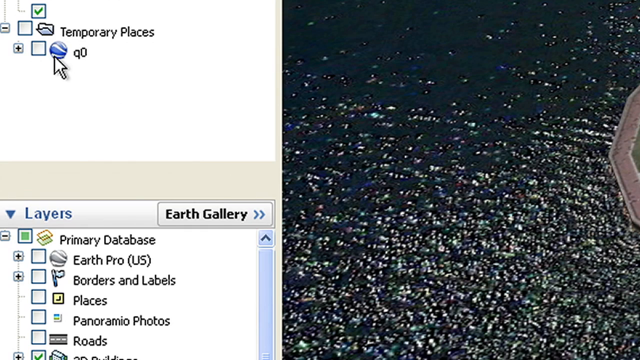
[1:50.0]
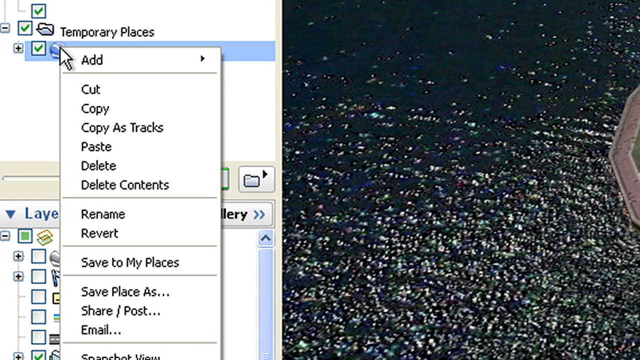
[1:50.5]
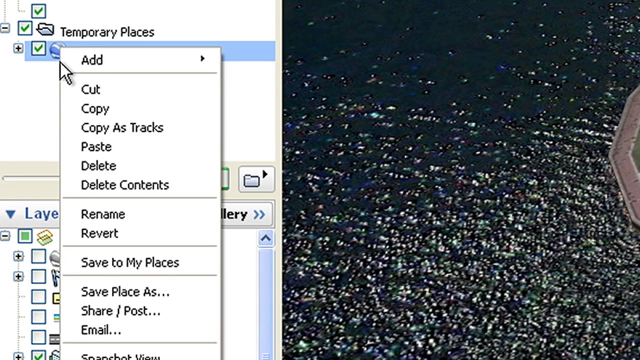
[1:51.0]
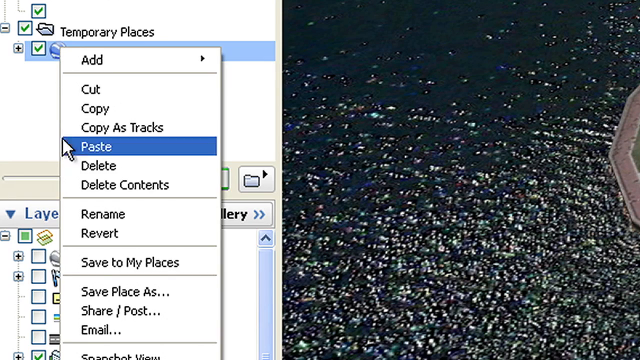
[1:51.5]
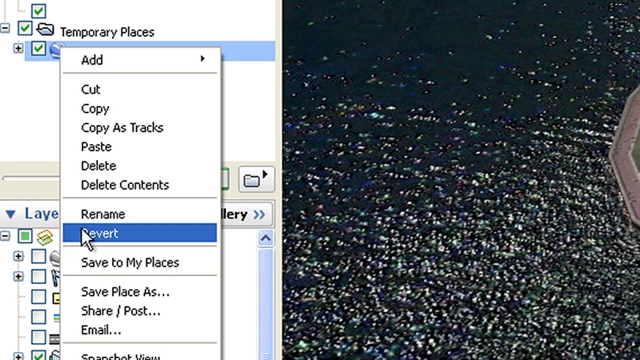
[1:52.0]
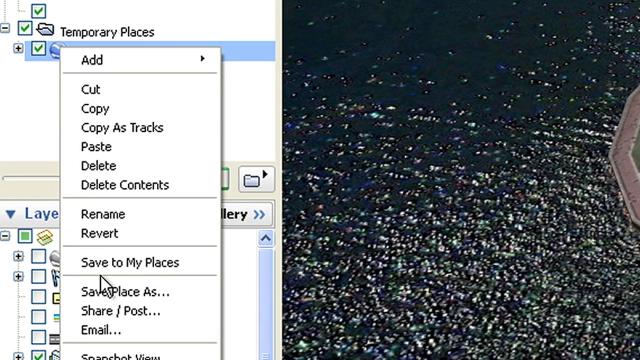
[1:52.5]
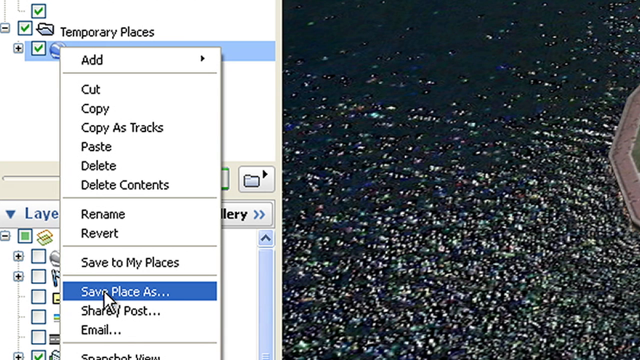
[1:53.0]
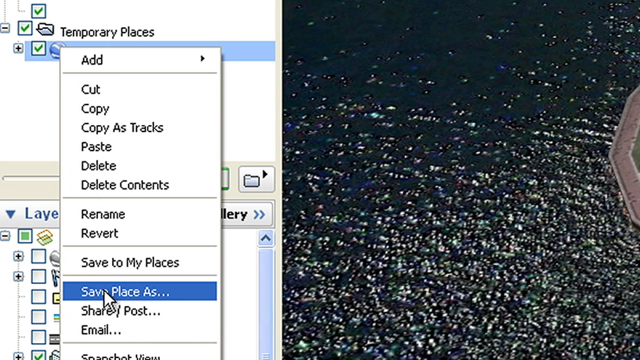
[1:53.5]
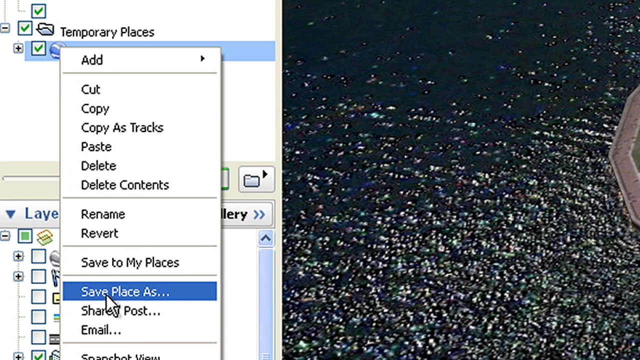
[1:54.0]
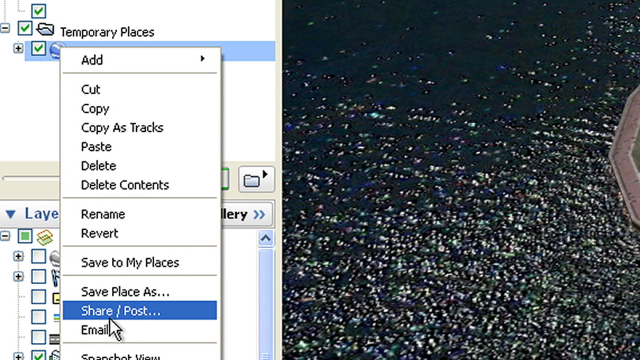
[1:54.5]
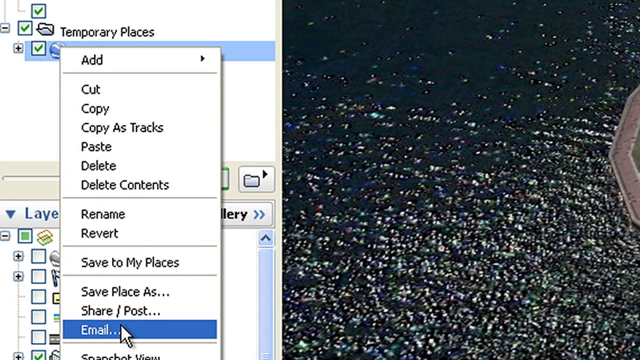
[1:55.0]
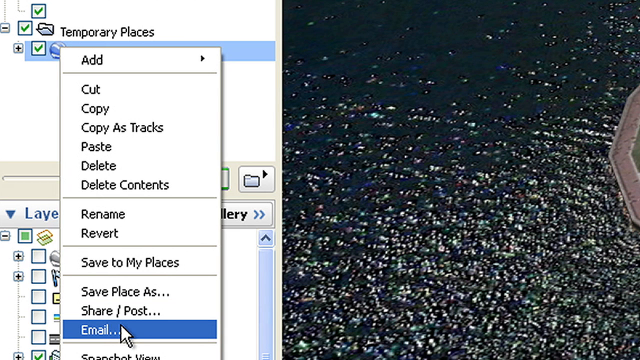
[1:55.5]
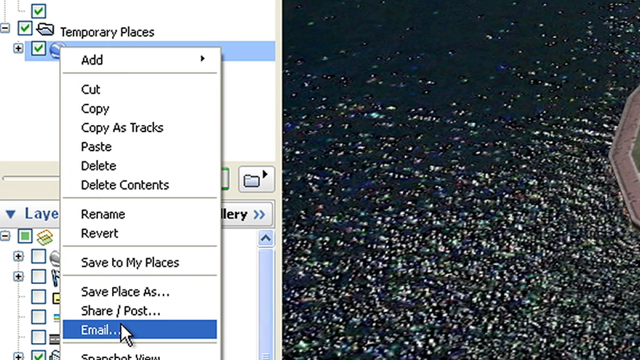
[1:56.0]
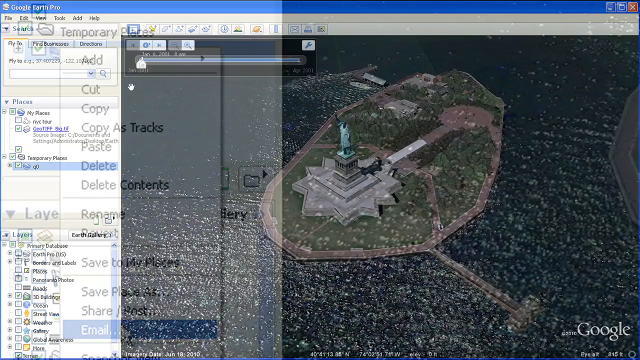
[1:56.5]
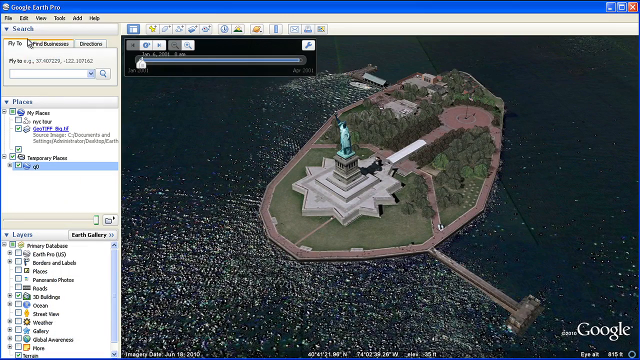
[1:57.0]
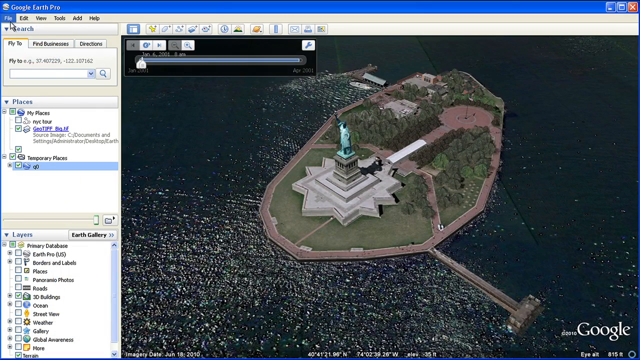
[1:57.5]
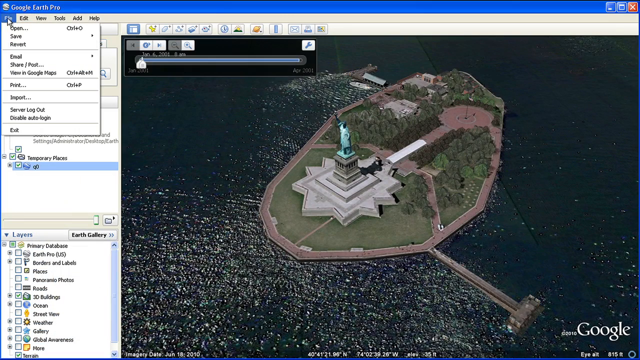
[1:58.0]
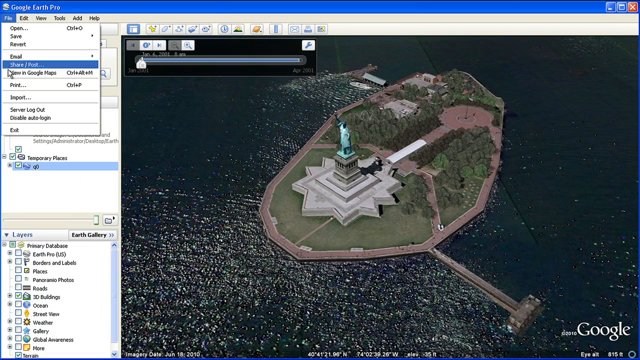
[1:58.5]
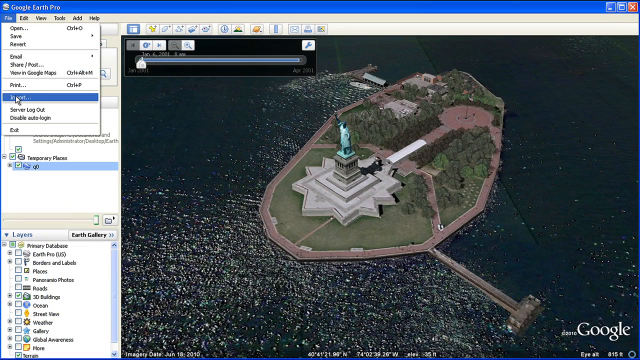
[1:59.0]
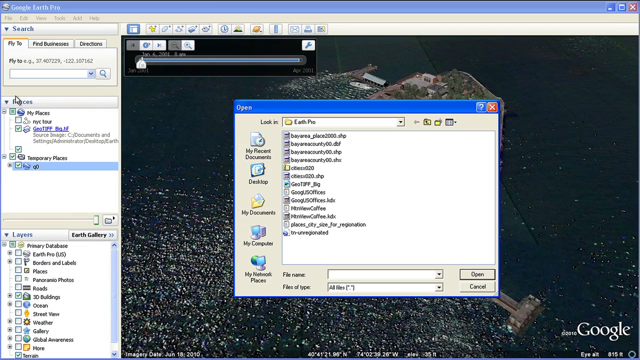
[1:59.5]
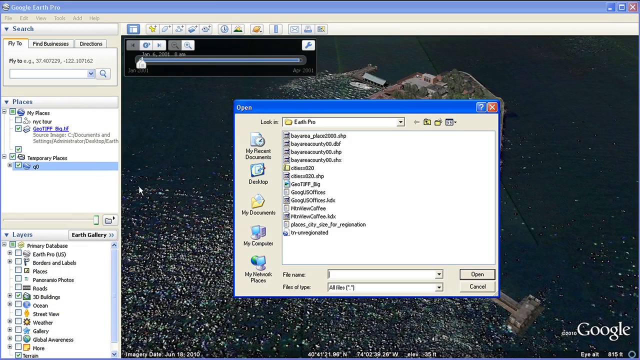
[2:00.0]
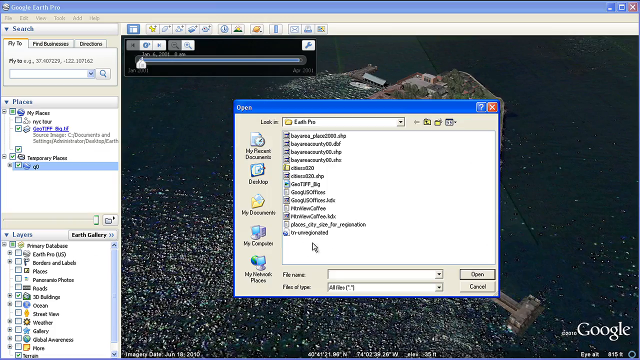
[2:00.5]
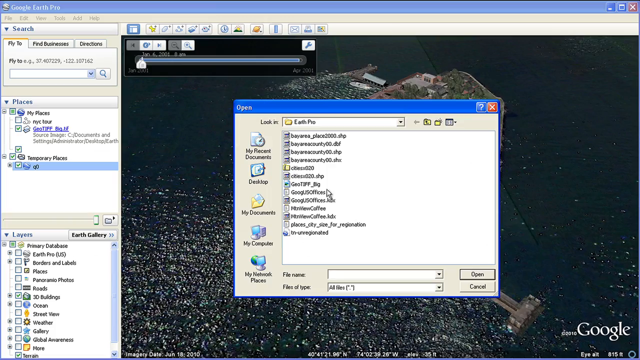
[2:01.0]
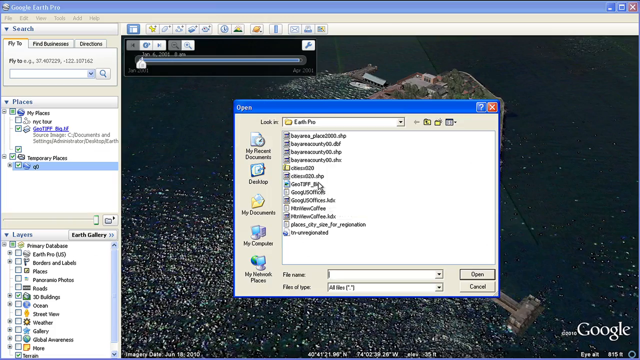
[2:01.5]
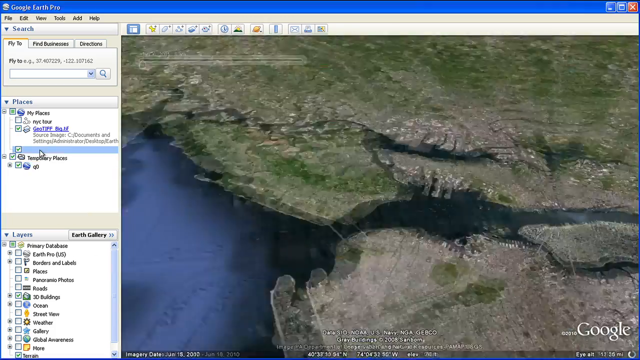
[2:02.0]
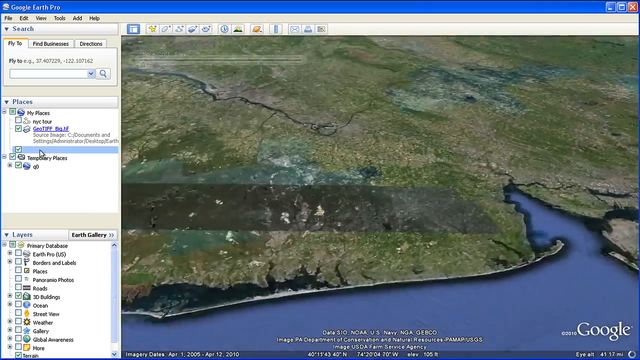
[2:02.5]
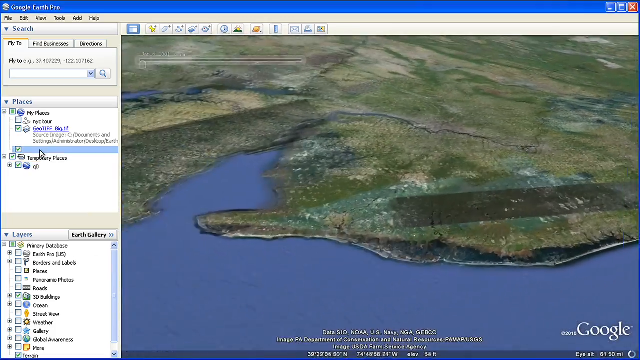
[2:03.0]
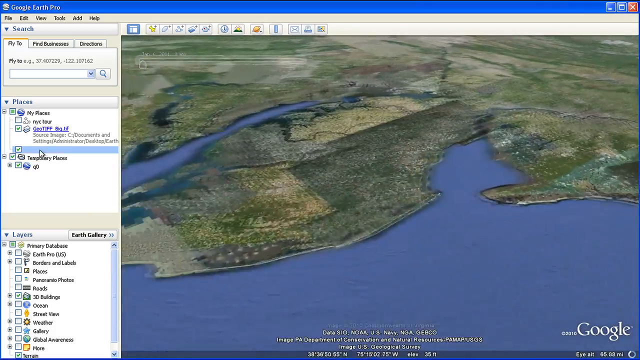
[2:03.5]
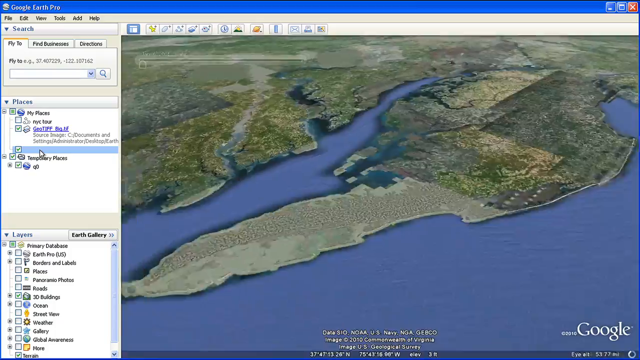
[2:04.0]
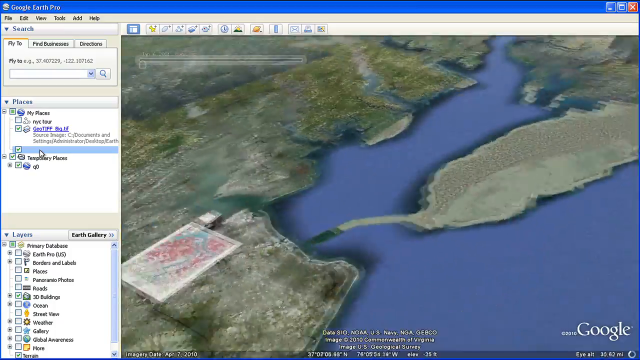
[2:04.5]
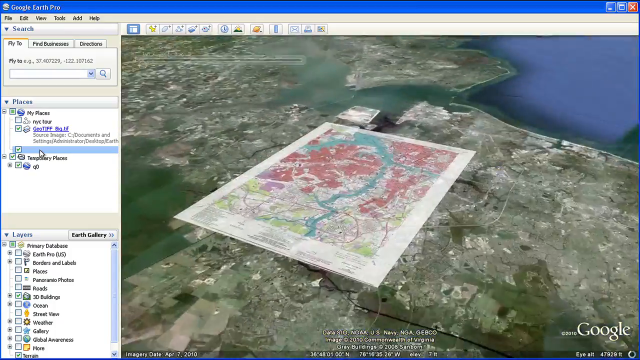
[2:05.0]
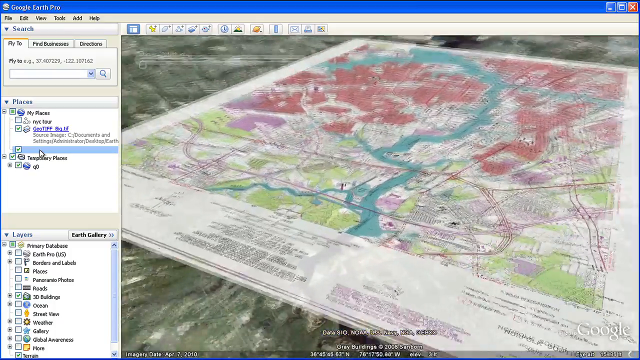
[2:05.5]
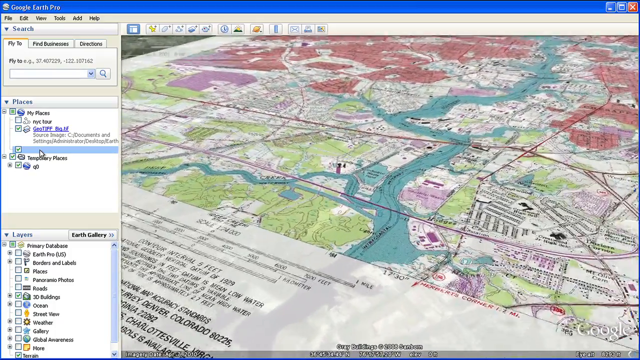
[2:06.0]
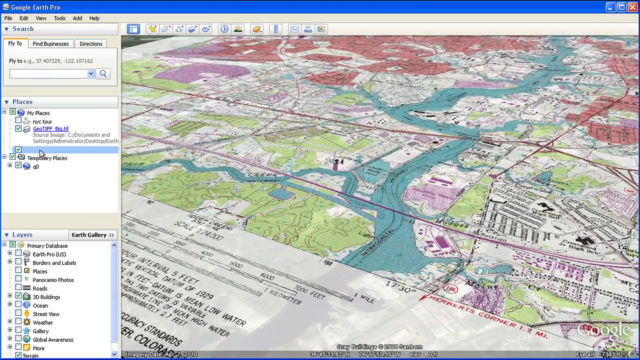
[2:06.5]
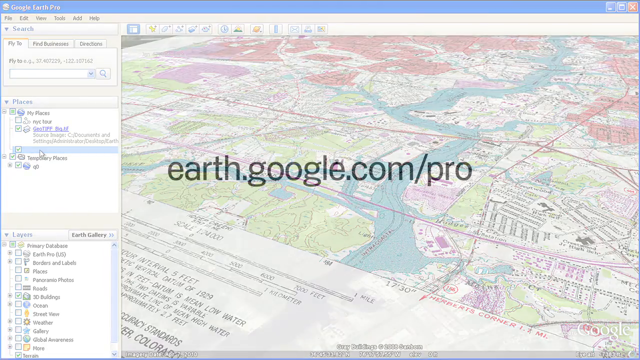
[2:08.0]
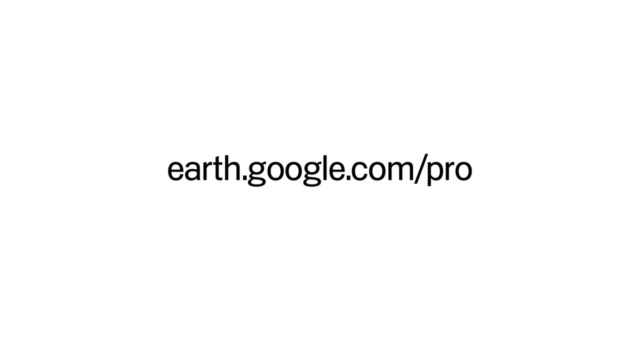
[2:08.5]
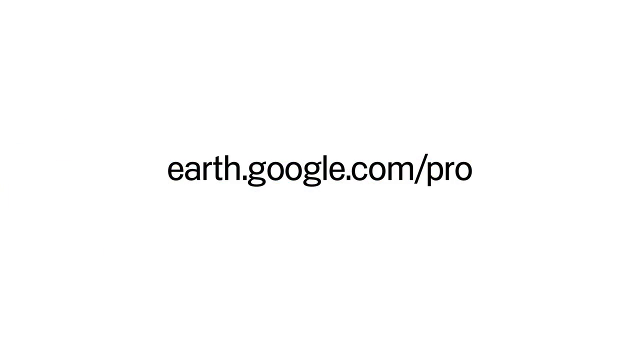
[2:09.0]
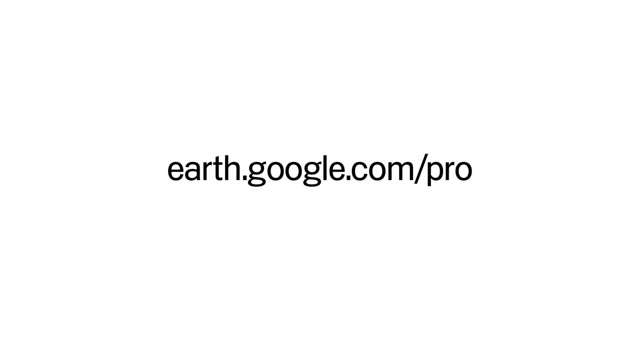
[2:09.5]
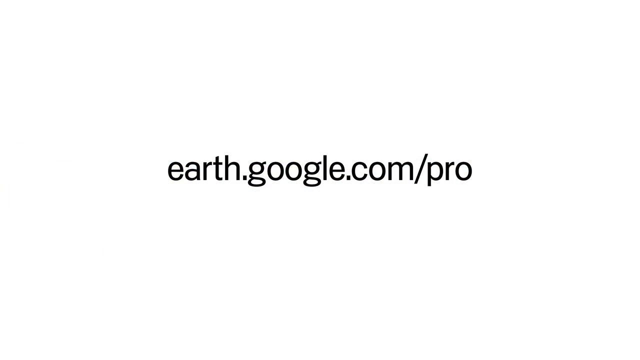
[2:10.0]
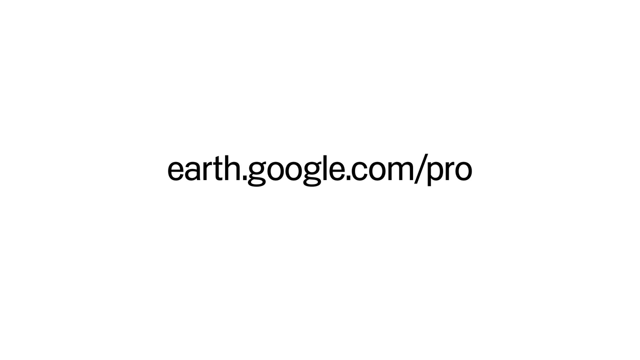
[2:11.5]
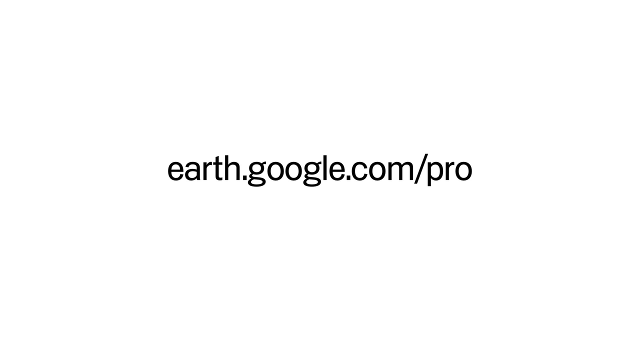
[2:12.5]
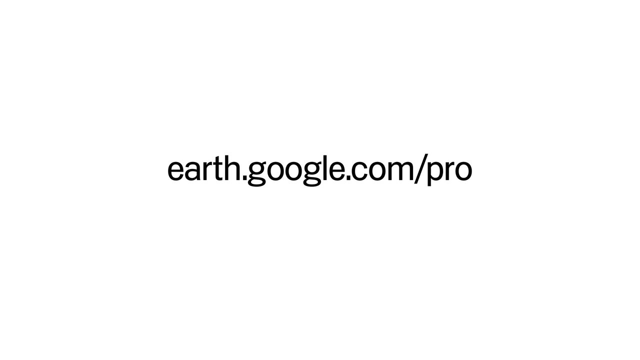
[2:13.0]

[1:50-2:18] The Places panel shows that "Q0" has been added as an option. Q0 is right-clicked and the cursor hovers over the Email option. The full window is shown again; the File tab is clicked, then Import, and a file named GeoTIFF-Big is clicked, which immediately opens a view of a map or city that looks like an old-time map. This is then completely overlaid with white, with a link in the middle that reads "earth.google.com/pro," which is the concluding screen. The quick shots seem to demonstrate the options and features of Google Earth Pro; some options are only hovered over with the cursor, apparently without actually printing or emailing.